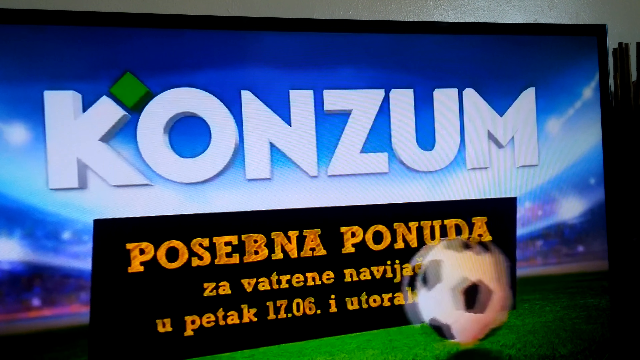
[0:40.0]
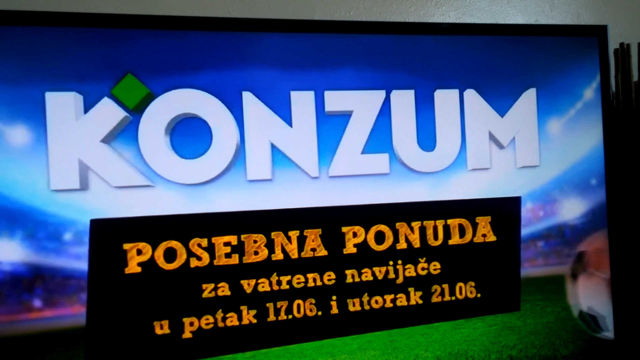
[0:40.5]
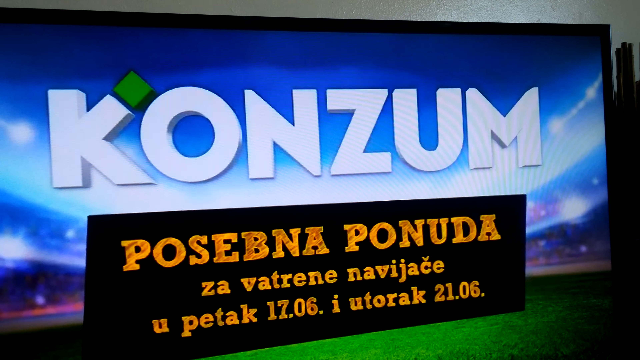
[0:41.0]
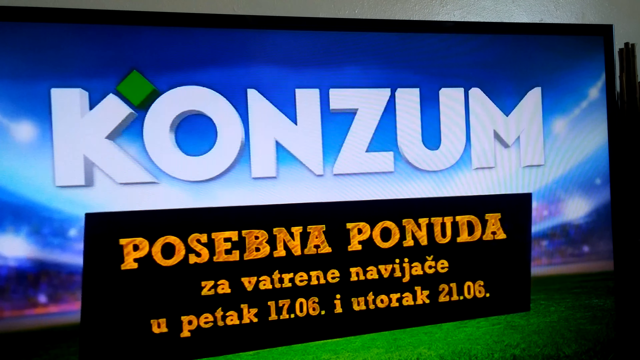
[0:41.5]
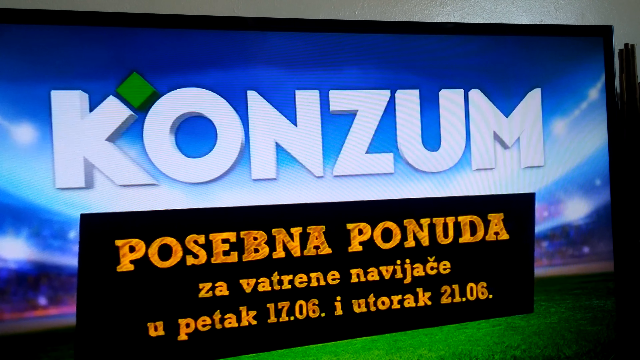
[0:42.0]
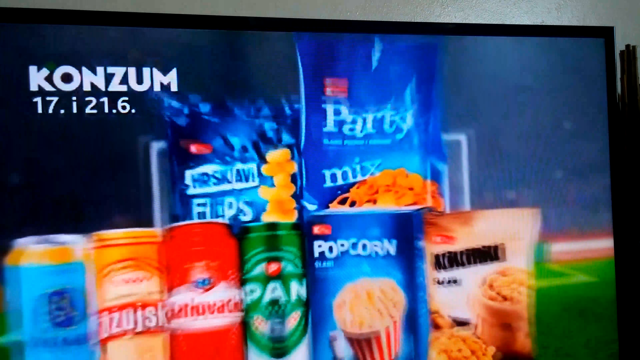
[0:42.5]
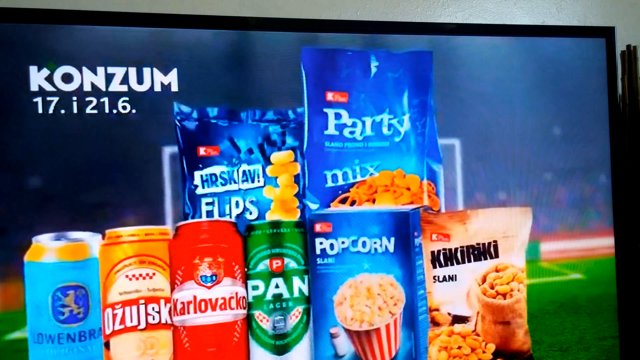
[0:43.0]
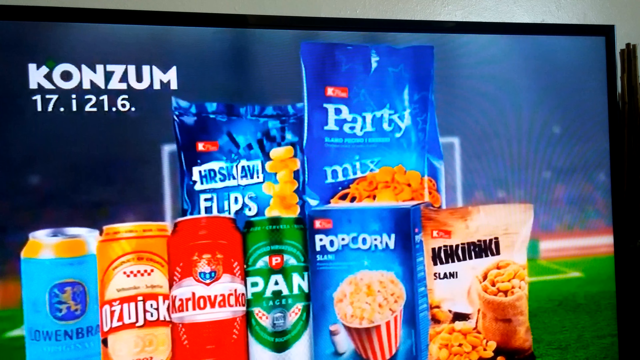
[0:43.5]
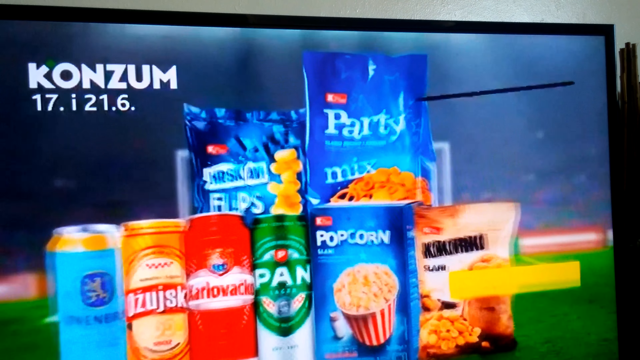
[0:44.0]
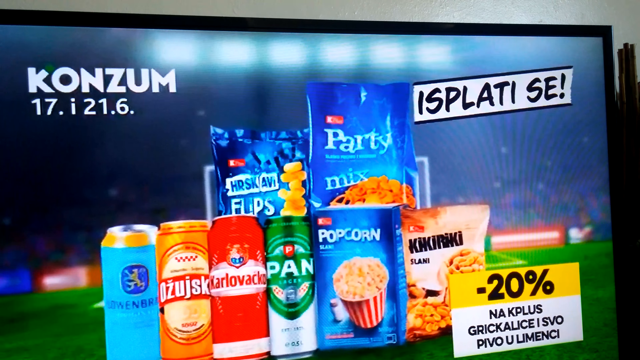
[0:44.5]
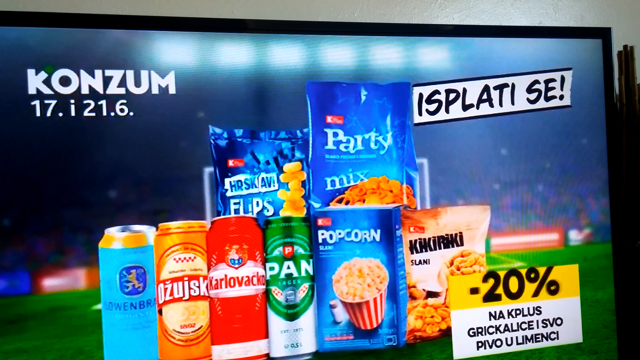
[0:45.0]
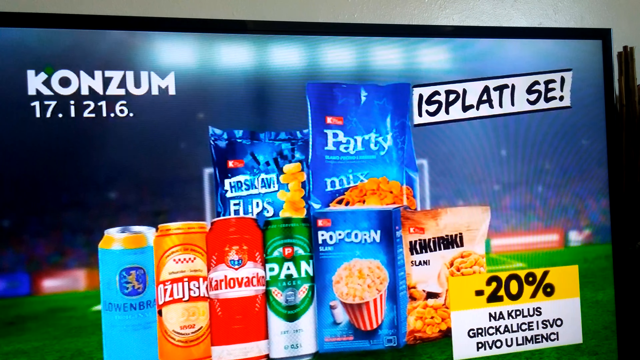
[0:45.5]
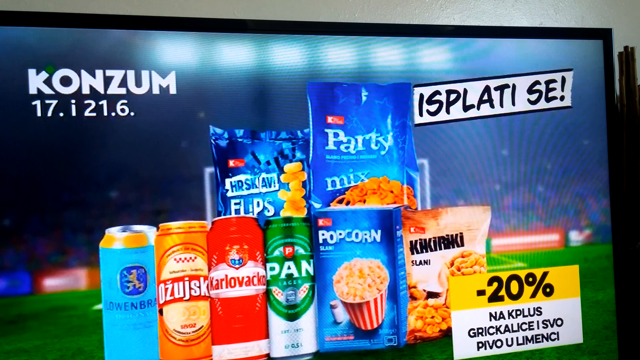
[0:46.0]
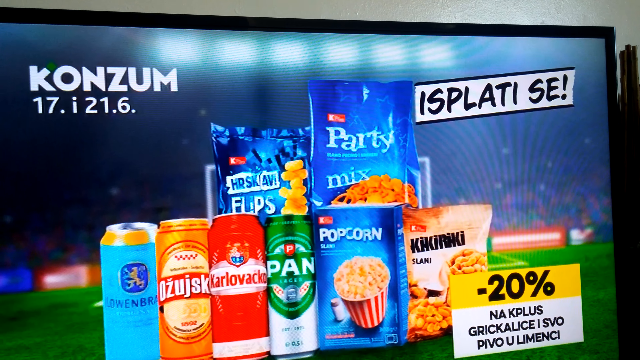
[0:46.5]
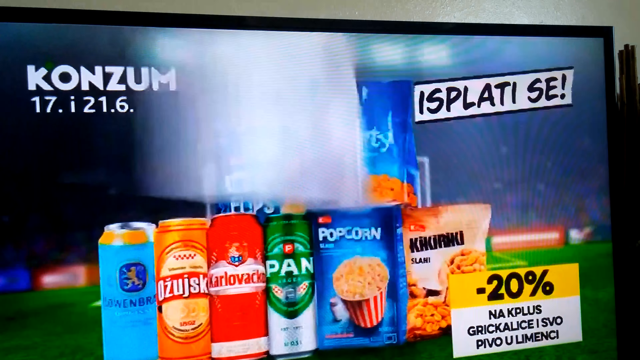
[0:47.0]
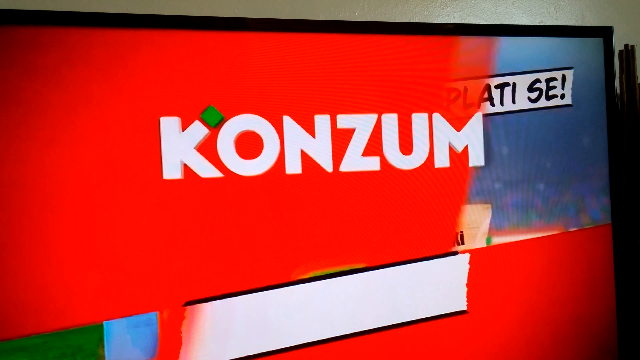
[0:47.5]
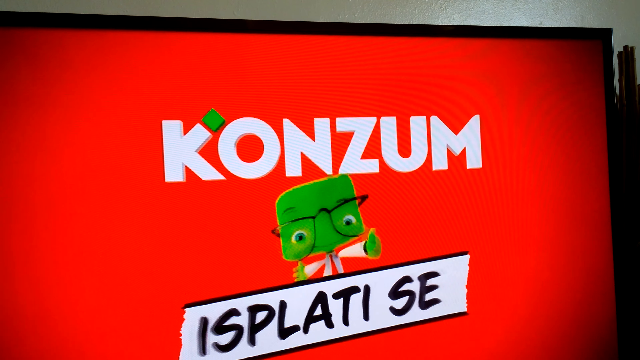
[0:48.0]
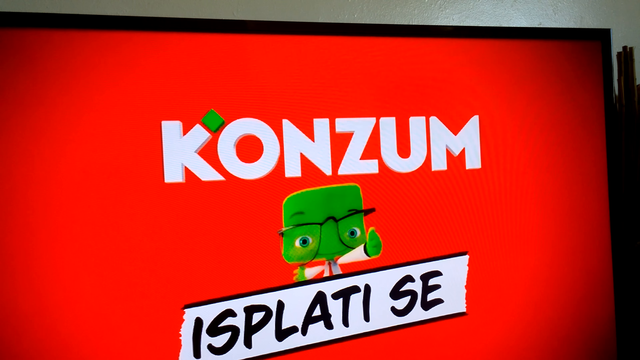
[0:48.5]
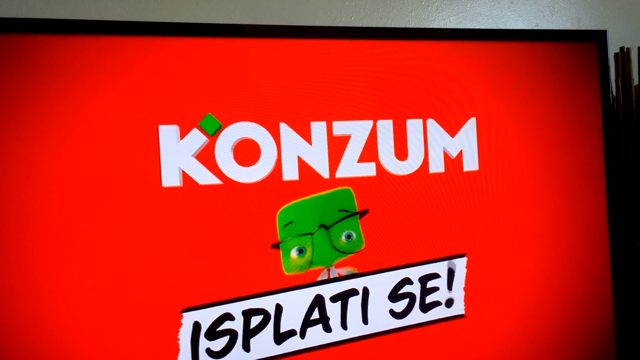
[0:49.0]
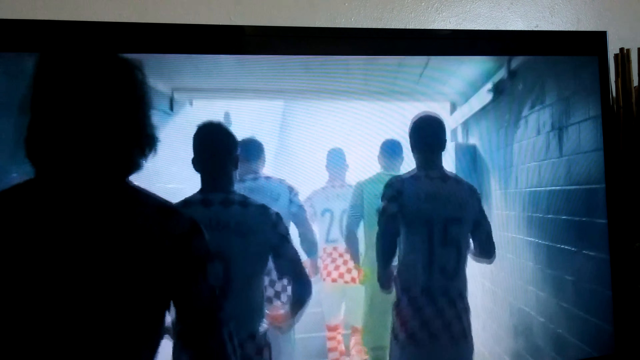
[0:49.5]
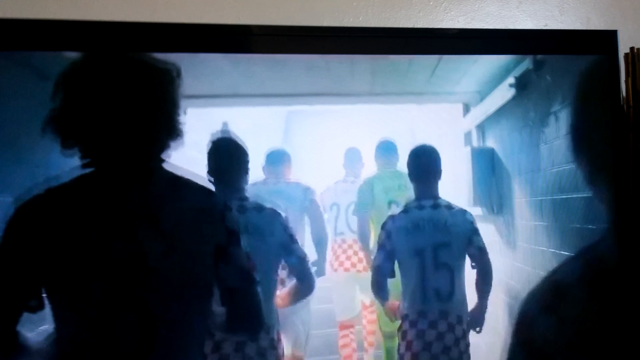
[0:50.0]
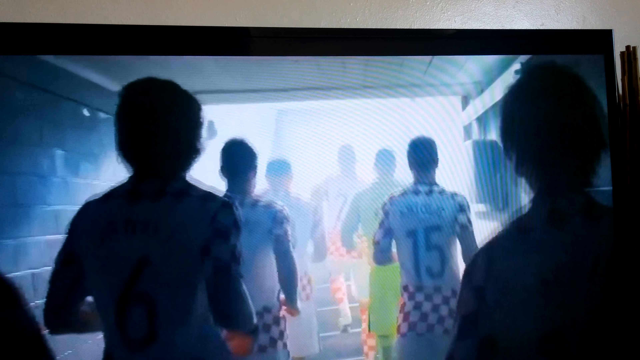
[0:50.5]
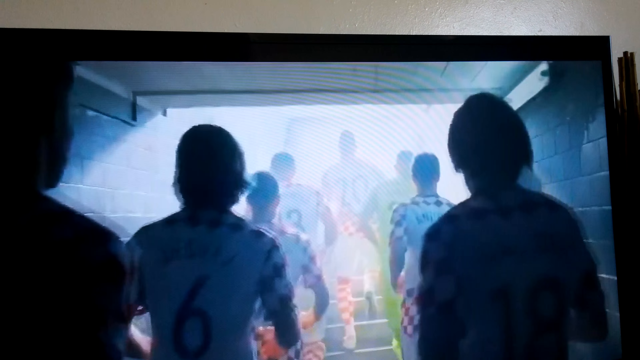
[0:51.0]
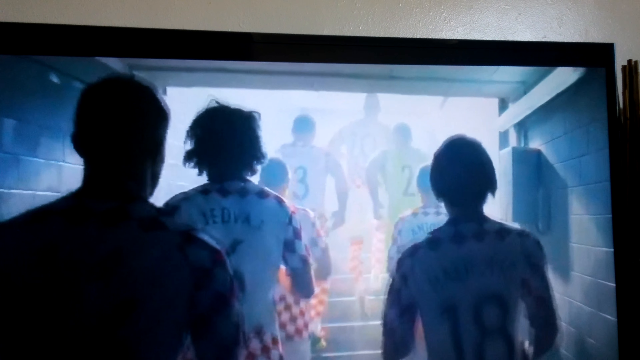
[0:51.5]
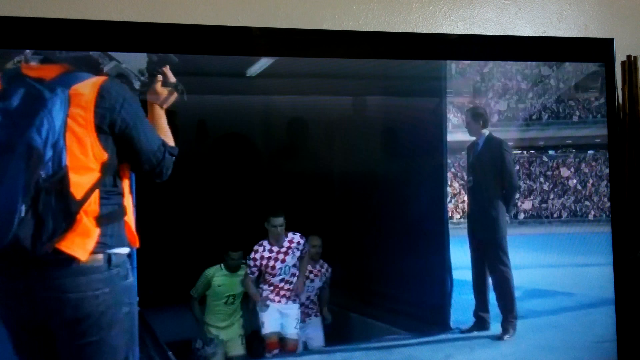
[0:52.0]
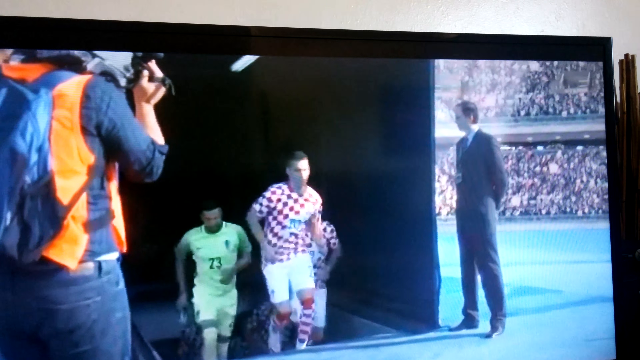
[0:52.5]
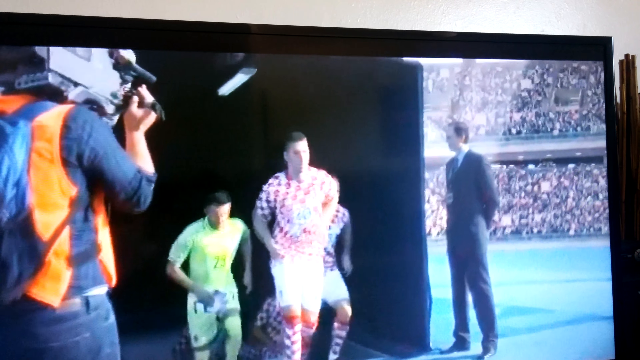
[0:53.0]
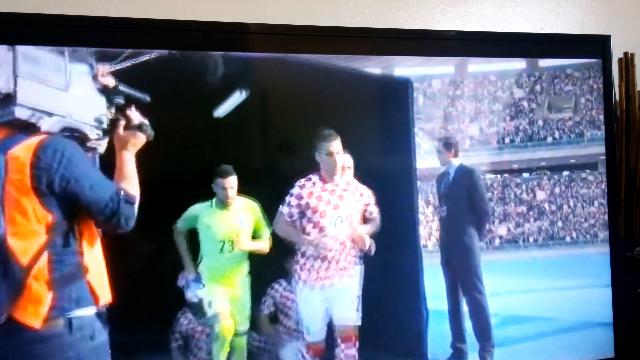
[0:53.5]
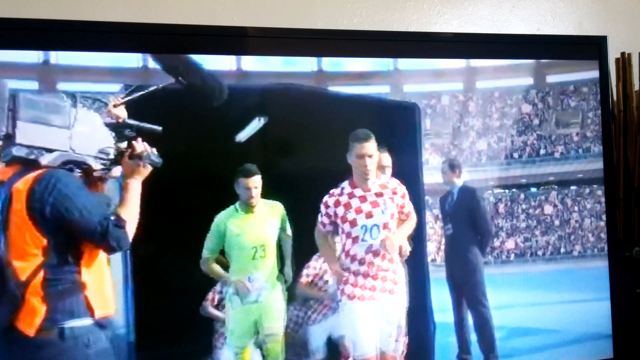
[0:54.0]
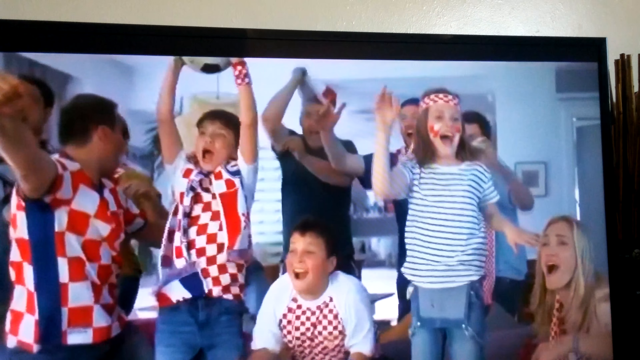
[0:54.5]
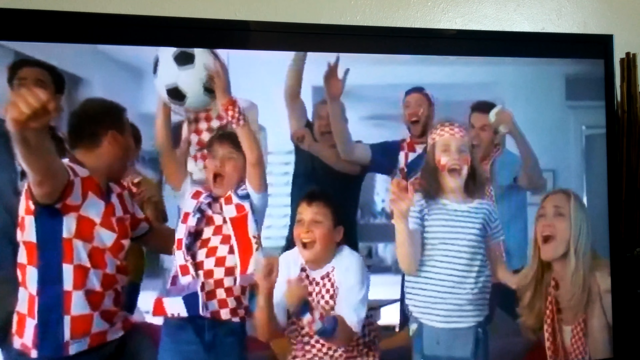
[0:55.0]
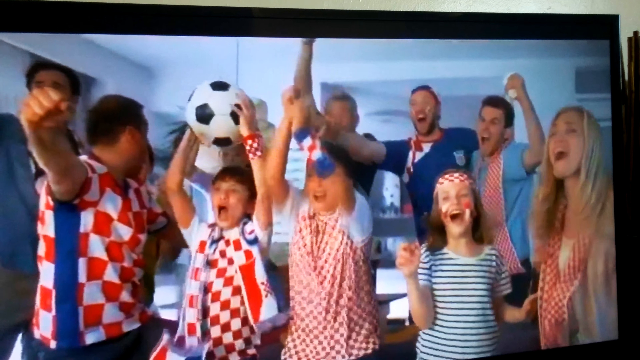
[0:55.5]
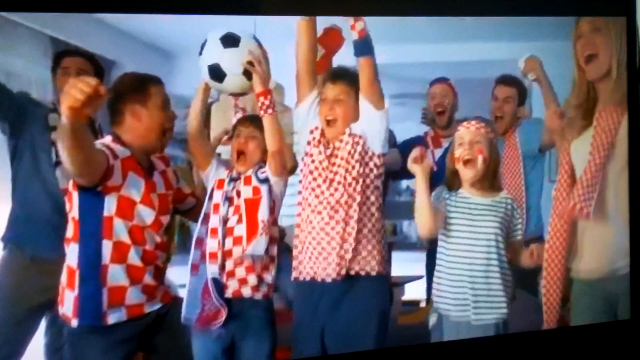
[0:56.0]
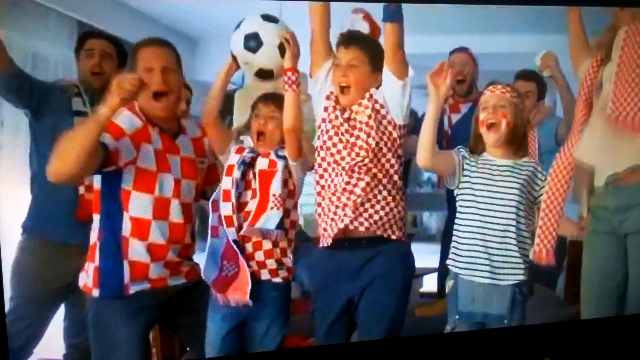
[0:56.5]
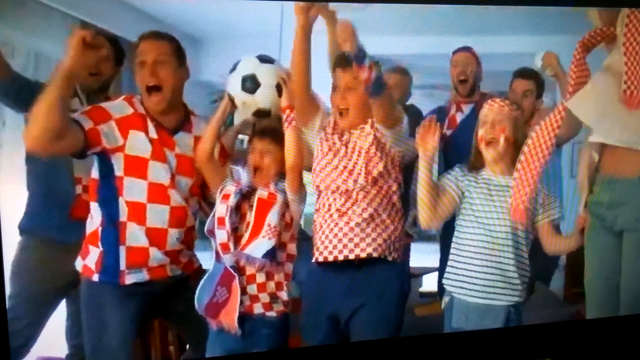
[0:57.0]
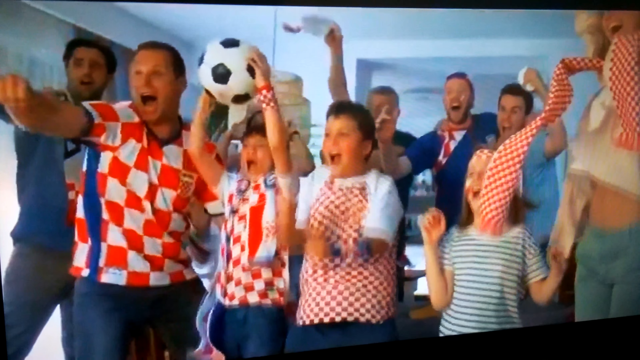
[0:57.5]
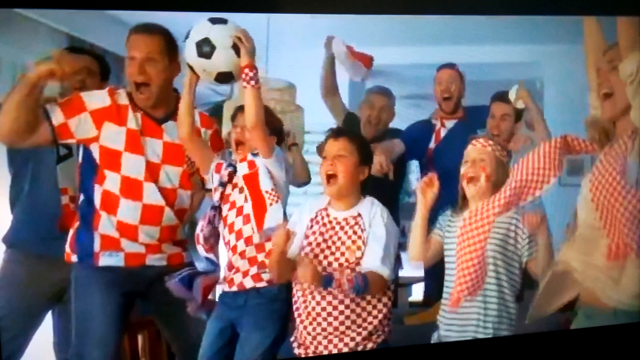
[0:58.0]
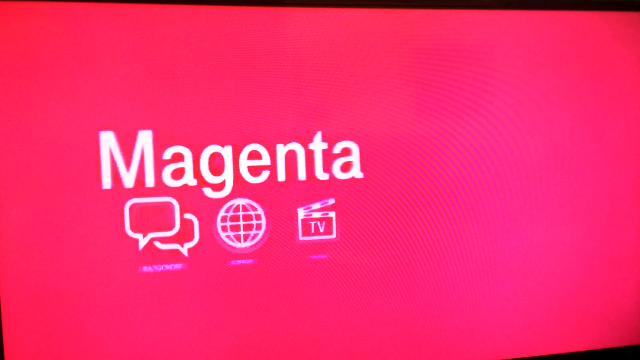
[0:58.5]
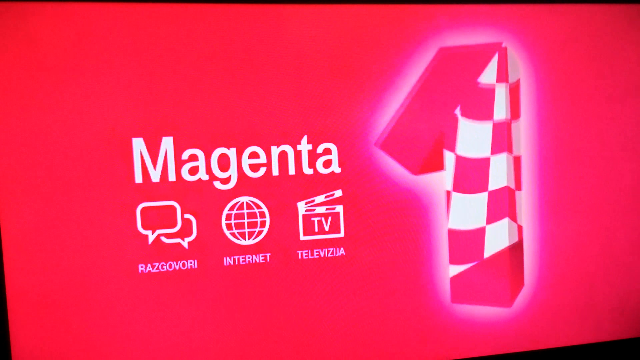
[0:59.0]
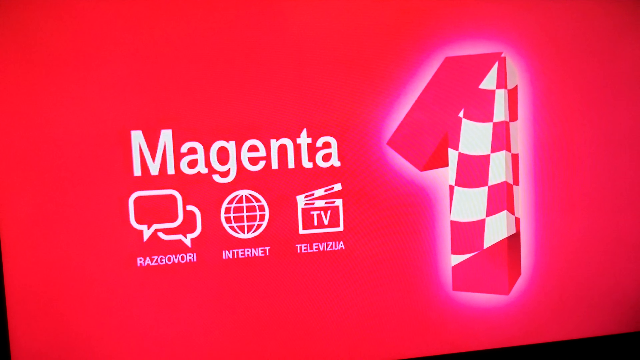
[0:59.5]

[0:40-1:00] A commercial opens on an image of snacks on a table. The word "Konzum" is shown on the screen, and underneath it reads "17.I21.6.", with a dot after the 6. A number of bags with different foods inside them are shown: party mix, popcorn, some kind of peanuts and some sort of cheese doodles. Different kinds of beer cans follow, with names including "Pan", shown among different snacks and sponsors of the soccer game. The screen kind of freezes for a second, then "Konzum" appears again, with a little mascot that looks like an alien creature at the bottom. The scene shifts to soccer players running out of the tunnel, getting ready to go onto the field, and the camera shifts to show some people filming them coming out of the tunnel. Next, some children inside a home, looking like a family watching the game, cheer and celebrate; some of them have soccer balls in their hands, and they look at the screen and jump up and down. Another ad follows with the text "magenta" and "internet" and a flag on the screen, showing Magenta as some kind of internet company, with a completely magenta background.